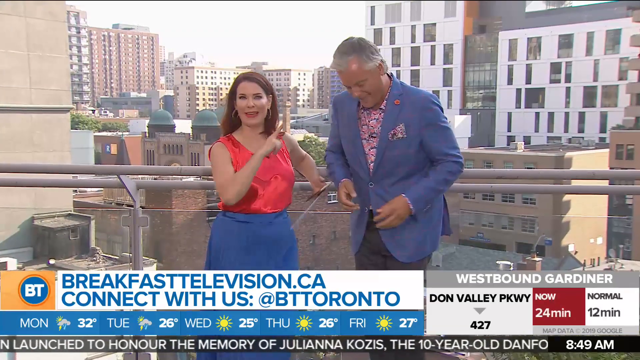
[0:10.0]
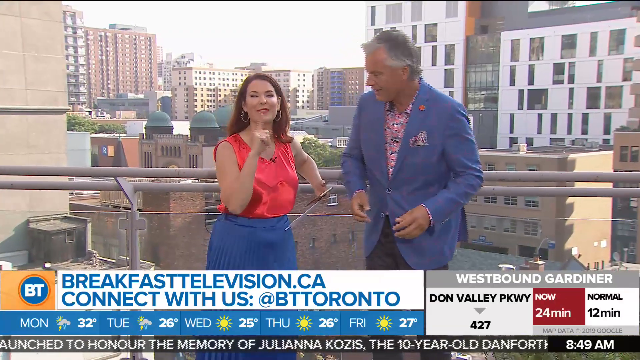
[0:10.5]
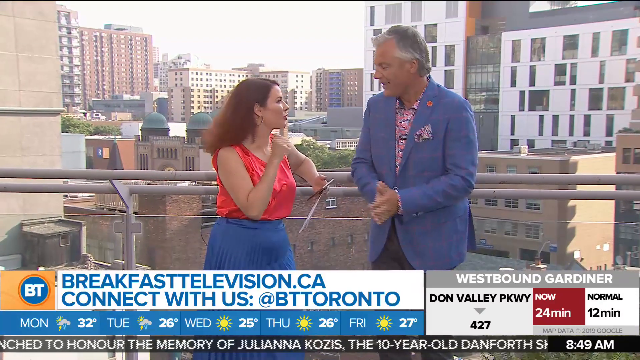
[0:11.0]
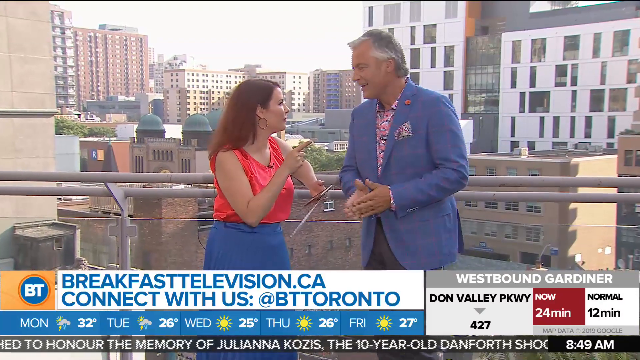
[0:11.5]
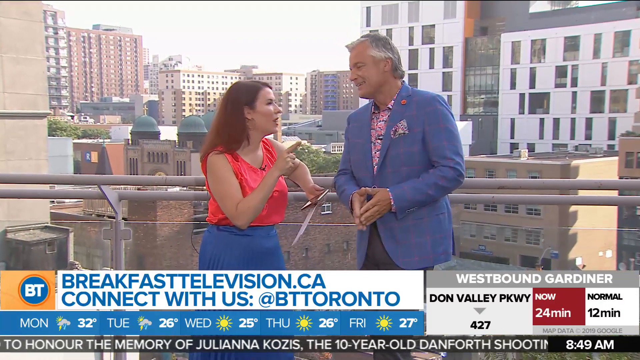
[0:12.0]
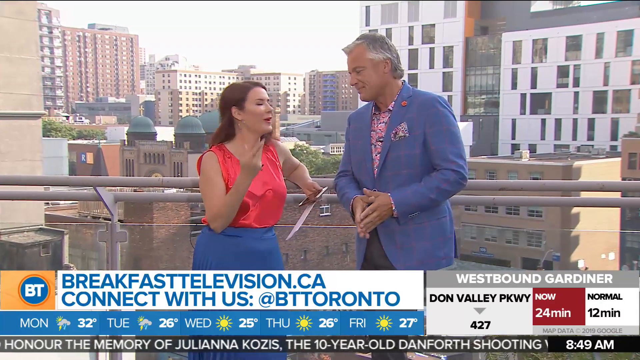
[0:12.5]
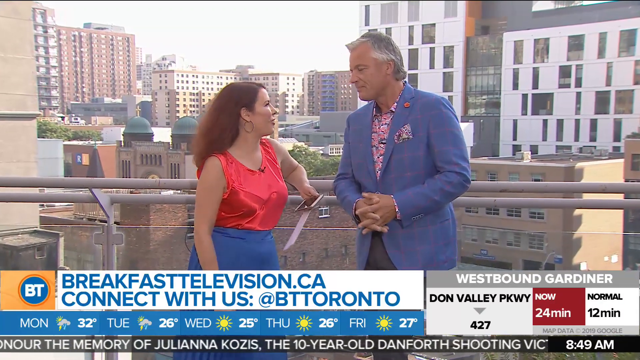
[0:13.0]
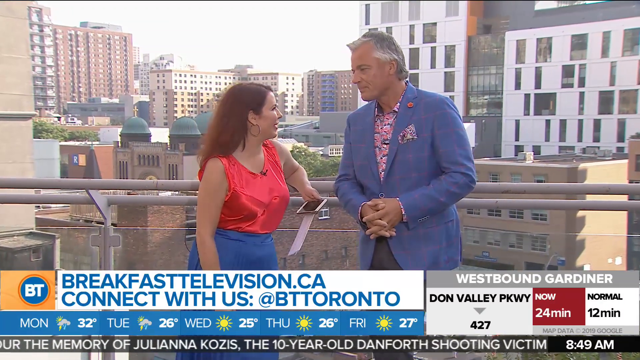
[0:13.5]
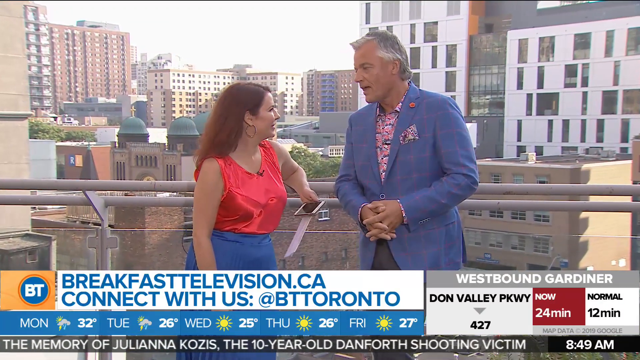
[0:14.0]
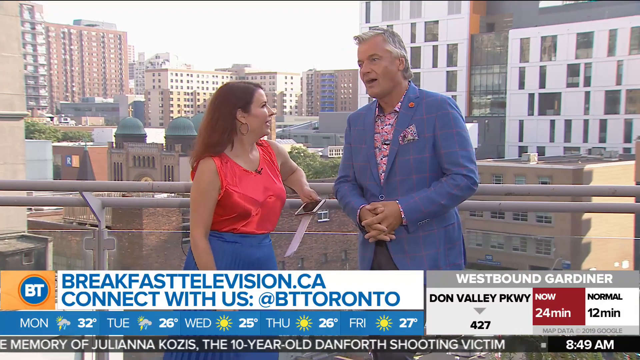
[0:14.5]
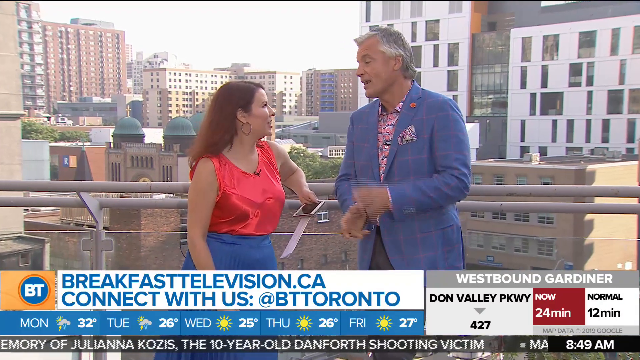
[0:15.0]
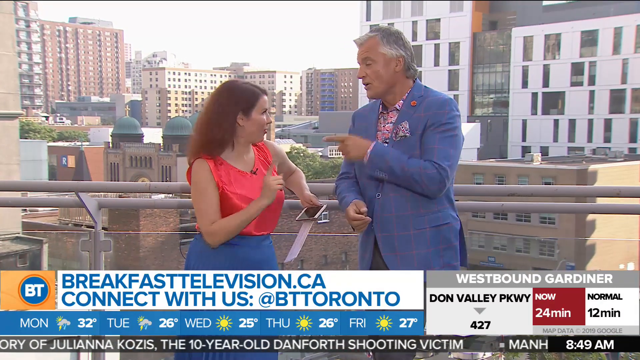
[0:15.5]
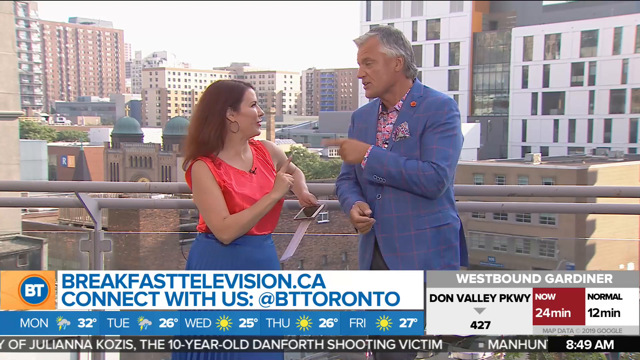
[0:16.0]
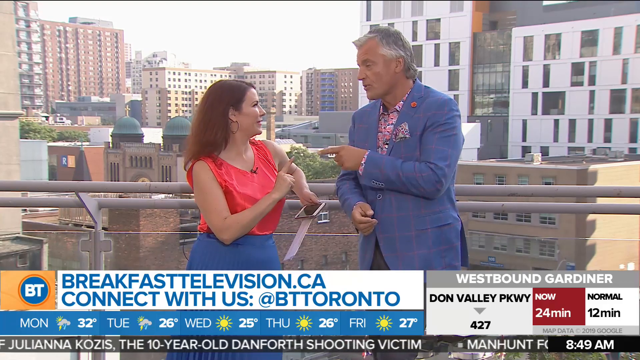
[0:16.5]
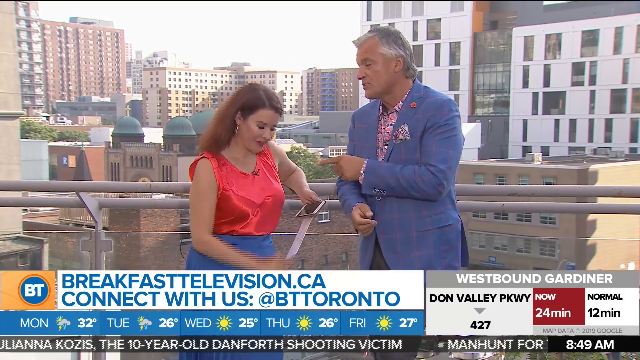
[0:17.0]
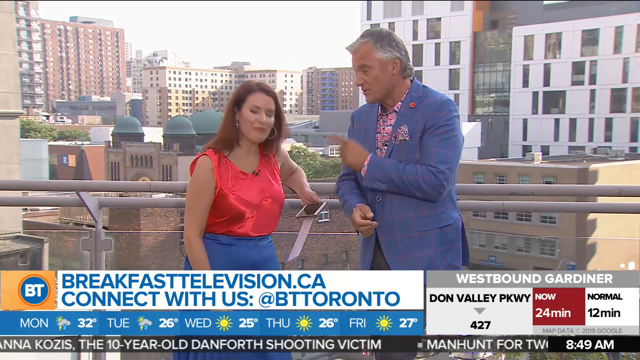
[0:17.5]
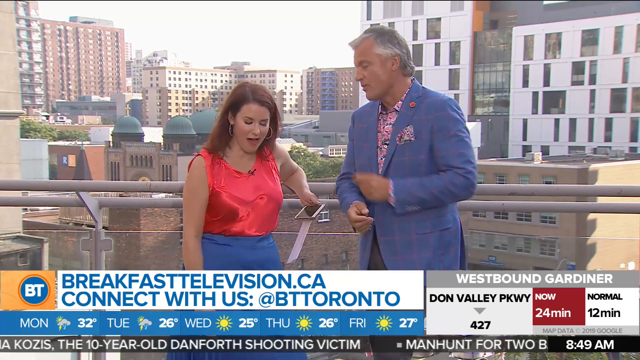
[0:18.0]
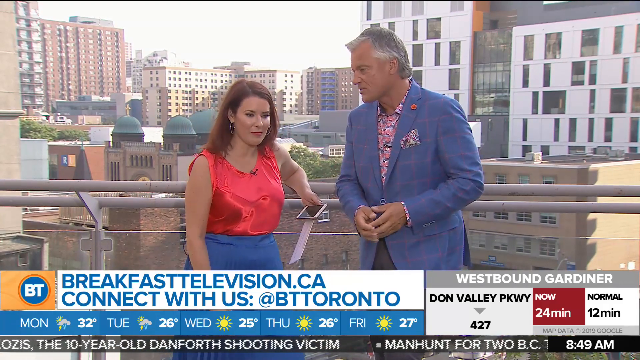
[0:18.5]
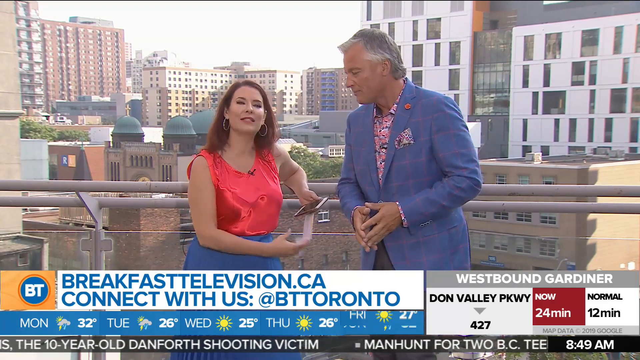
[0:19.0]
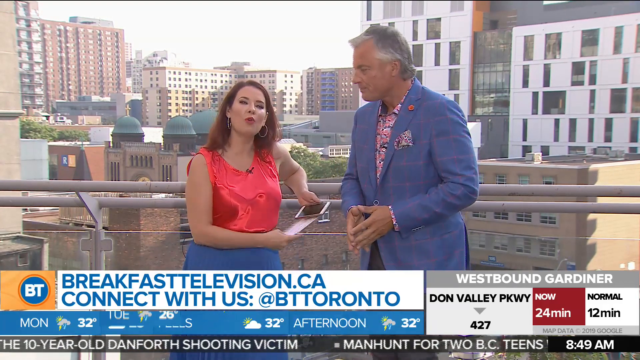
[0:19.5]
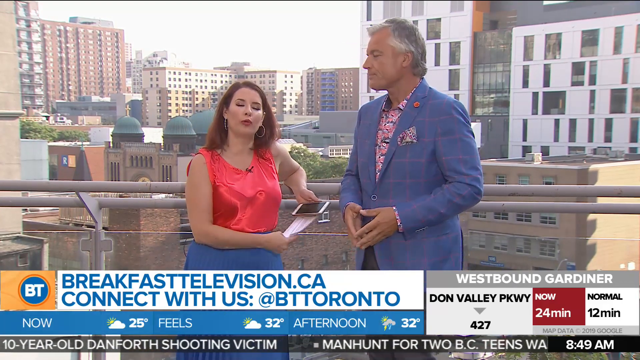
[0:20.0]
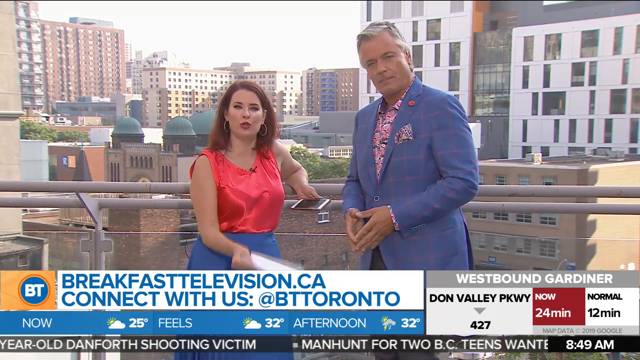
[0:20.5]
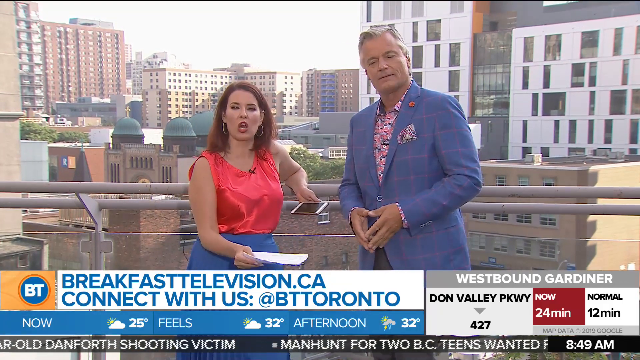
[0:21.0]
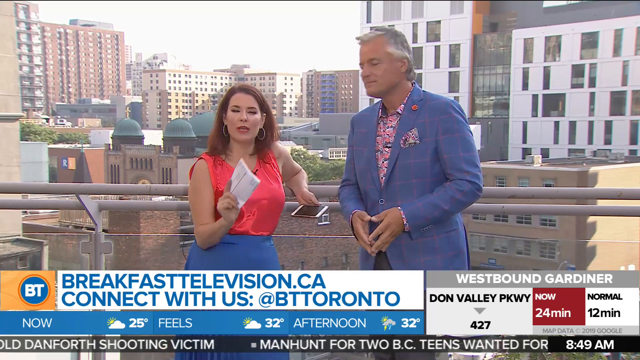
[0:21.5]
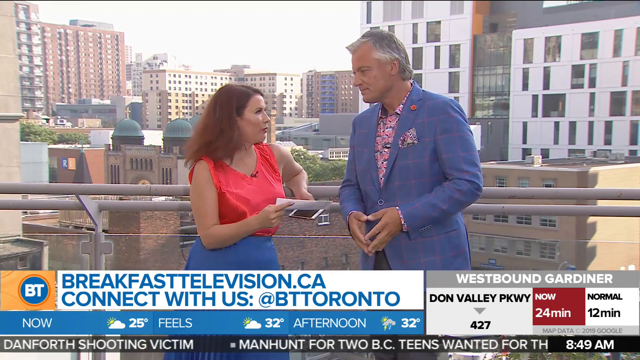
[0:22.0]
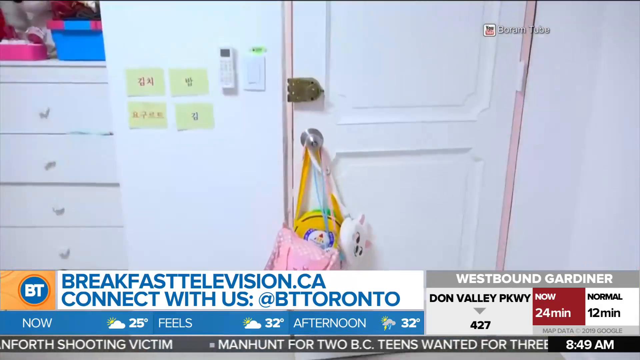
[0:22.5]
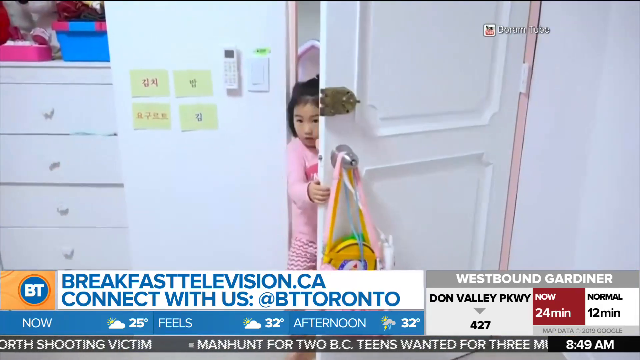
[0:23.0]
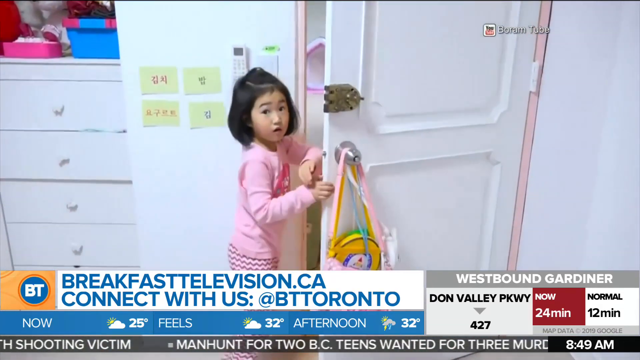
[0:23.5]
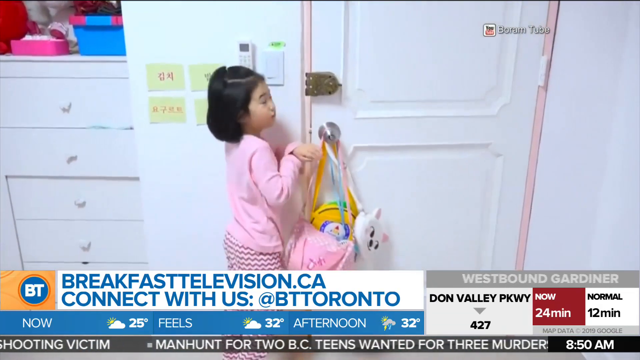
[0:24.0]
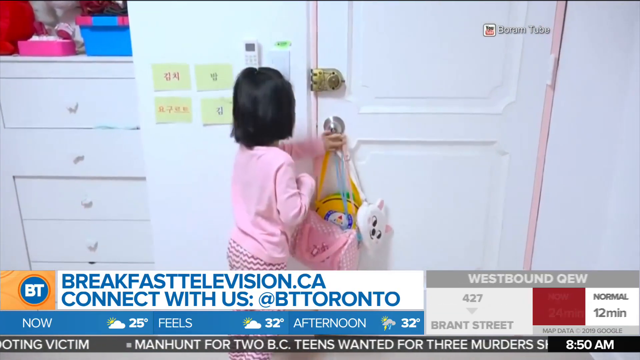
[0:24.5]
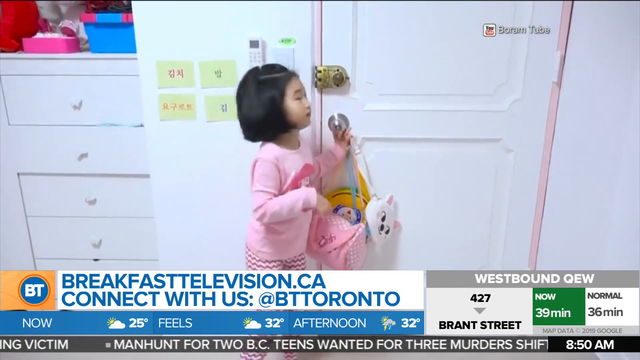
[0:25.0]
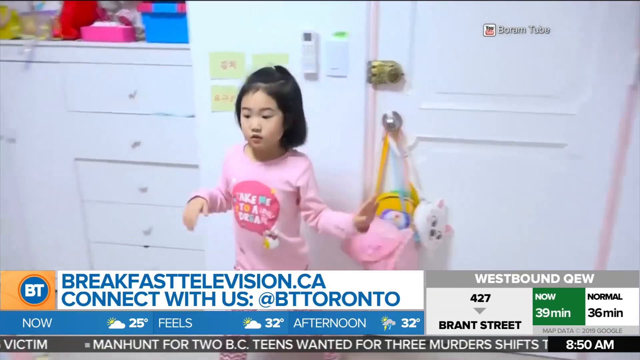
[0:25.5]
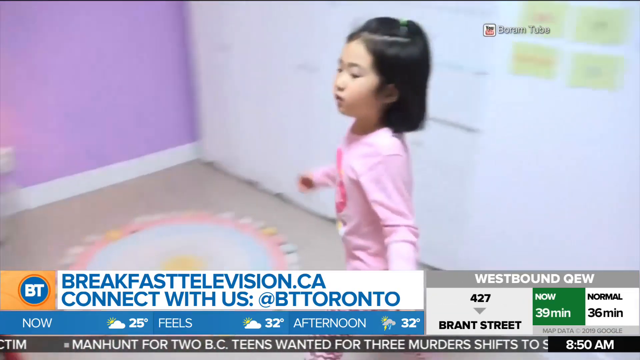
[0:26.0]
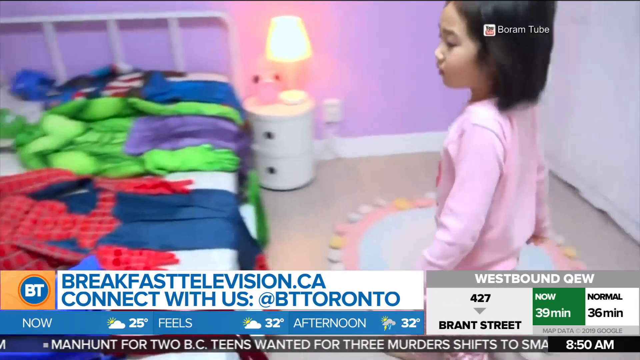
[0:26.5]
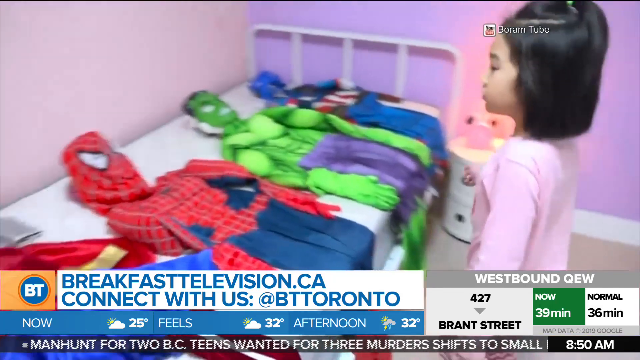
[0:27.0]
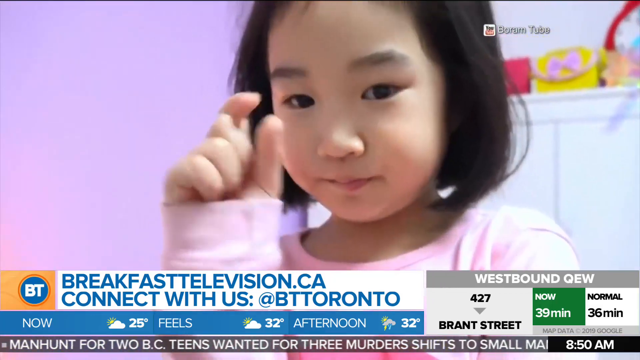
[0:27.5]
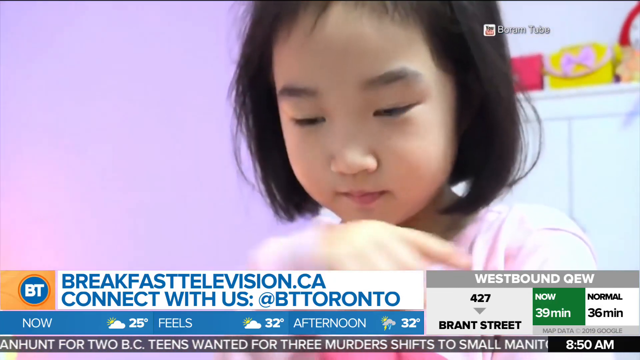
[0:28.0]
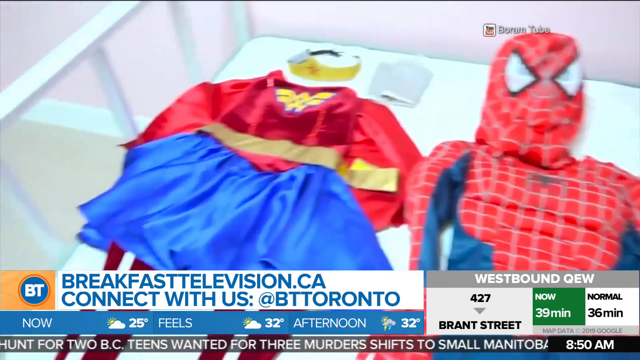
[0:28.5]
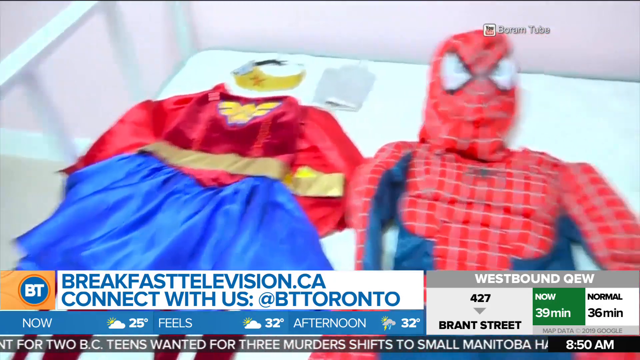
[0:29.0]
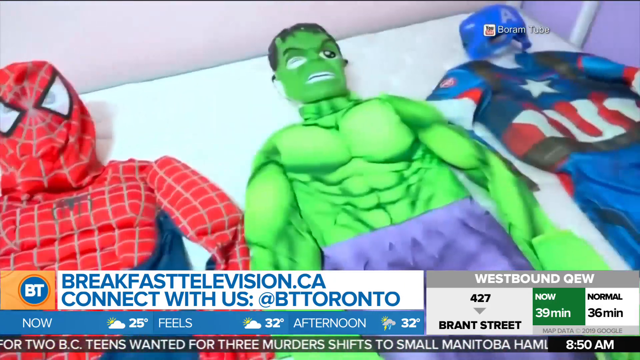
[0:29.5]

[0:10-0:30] The video switches to the show's two hosts, who appear to be on a balcony or a rooftop in the city, with buildings and downtown Toronto in the background. The man is approximately in his late 40s and wears a blue sports jacket. The woman, maybe in her late 30s, wears a red shirt with a blue dress. Both are white. They talk to each other in what seems to be a light-hearted manner. The video then cuts to a home video with "Balum Tube" in the top right-hand corner, apparently from someone's social media account. In it, a small Japanese girl walks into what looks like her bedroom while someone films her. She walks over to her bed, where costumes are laid out: Captain America, the Hulk, Spider-Man and Wonder Woman, and she chooses which one to wear.